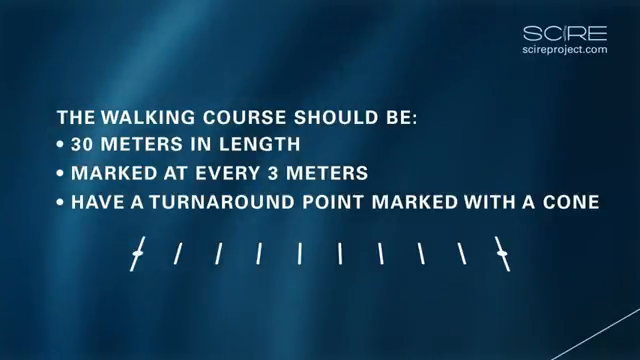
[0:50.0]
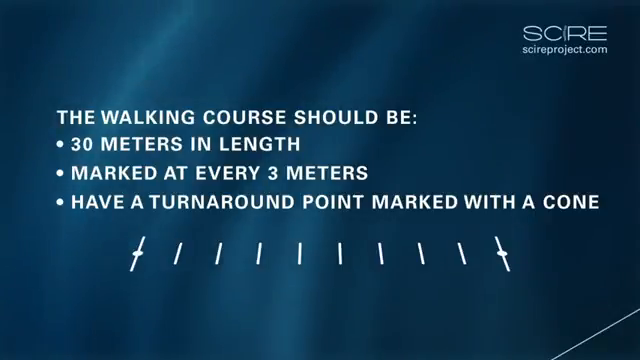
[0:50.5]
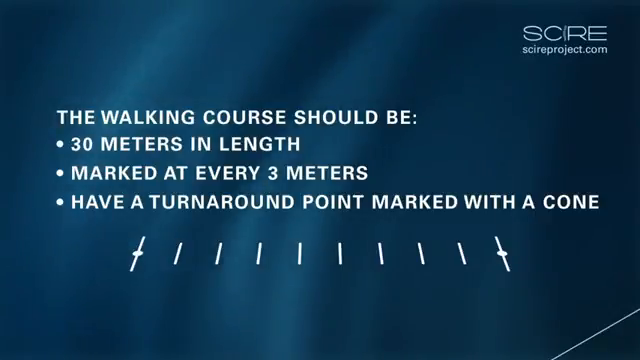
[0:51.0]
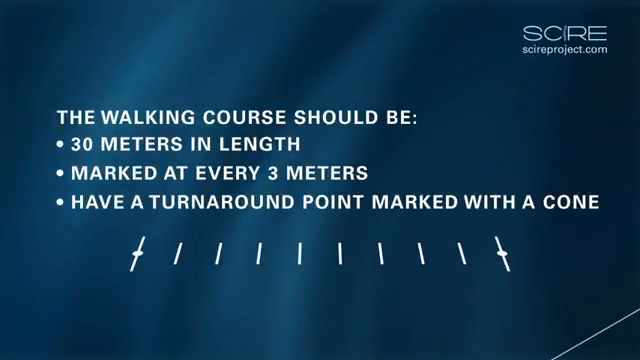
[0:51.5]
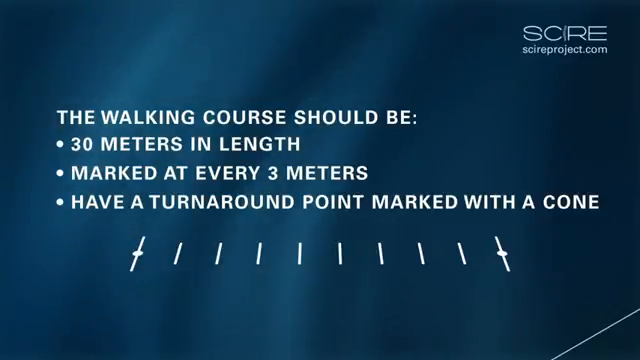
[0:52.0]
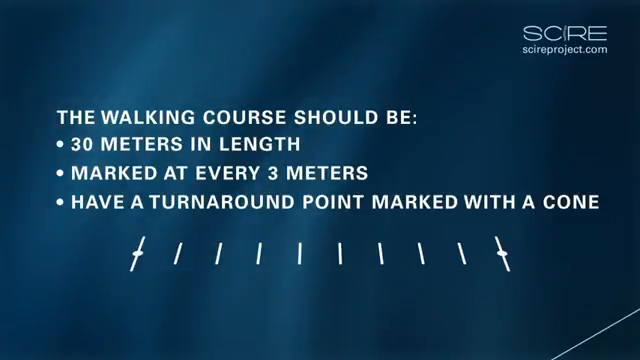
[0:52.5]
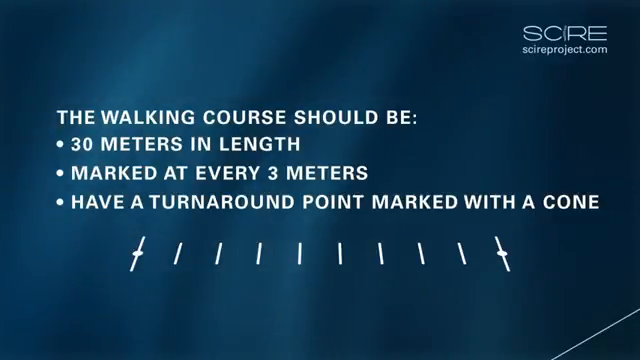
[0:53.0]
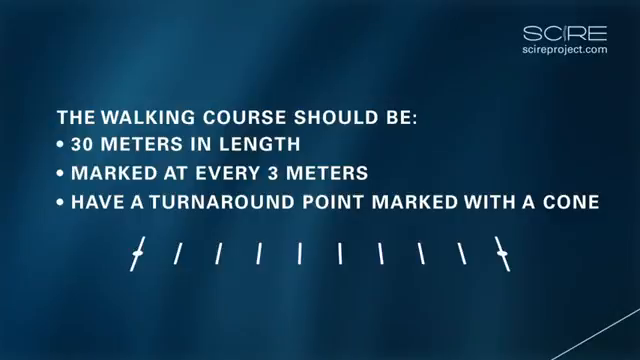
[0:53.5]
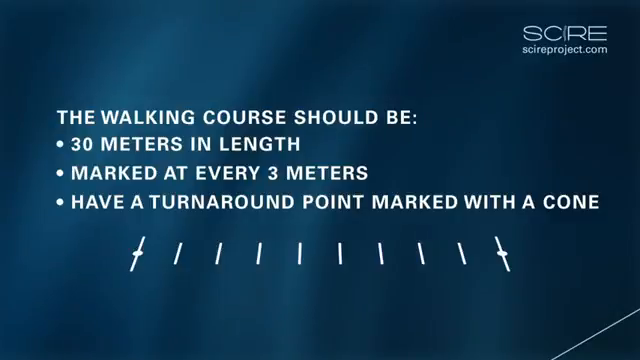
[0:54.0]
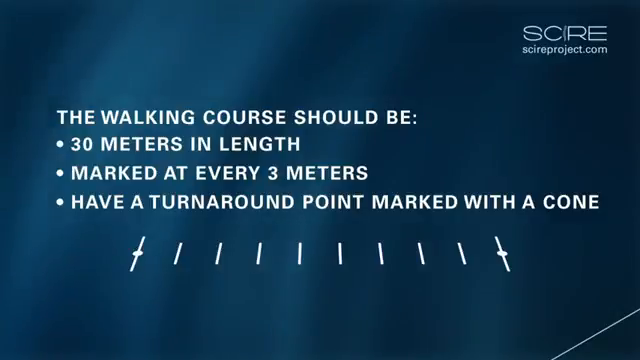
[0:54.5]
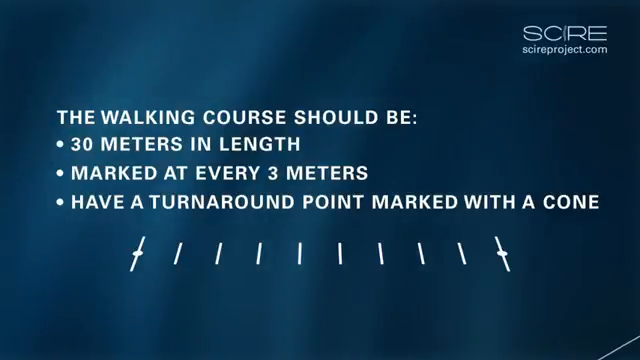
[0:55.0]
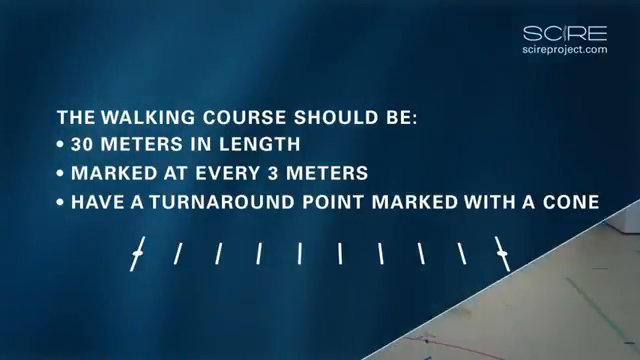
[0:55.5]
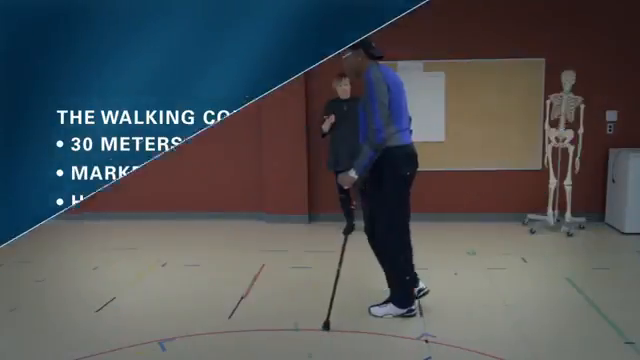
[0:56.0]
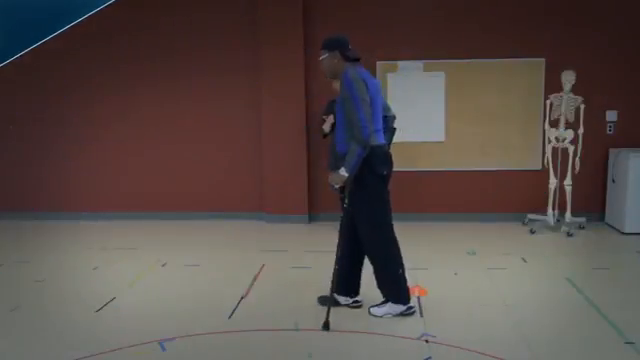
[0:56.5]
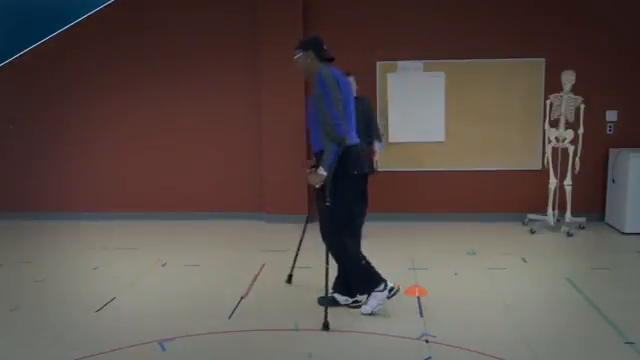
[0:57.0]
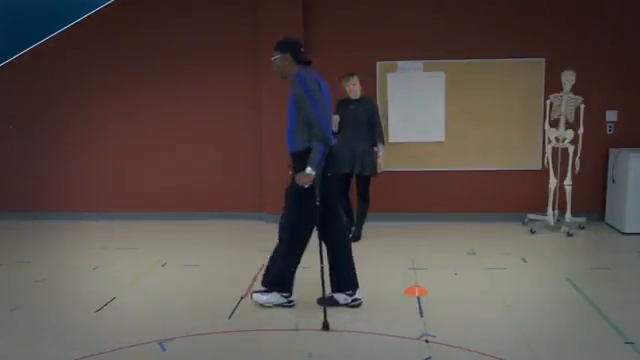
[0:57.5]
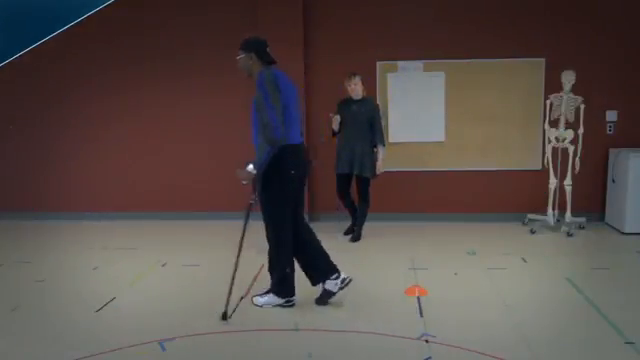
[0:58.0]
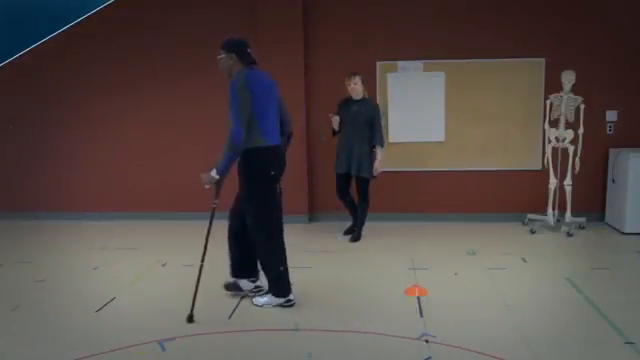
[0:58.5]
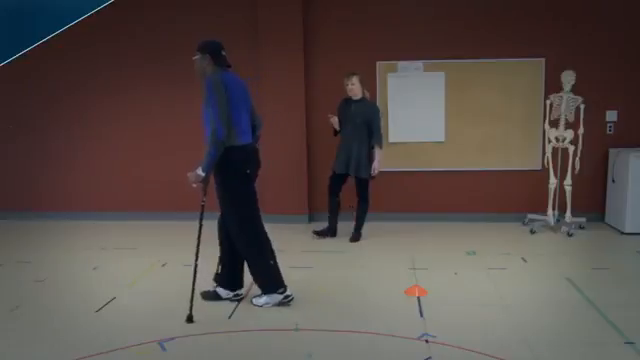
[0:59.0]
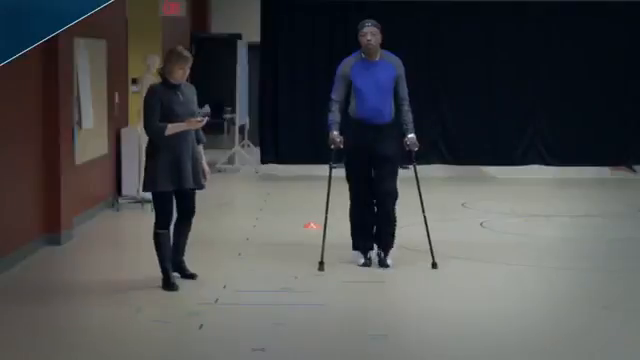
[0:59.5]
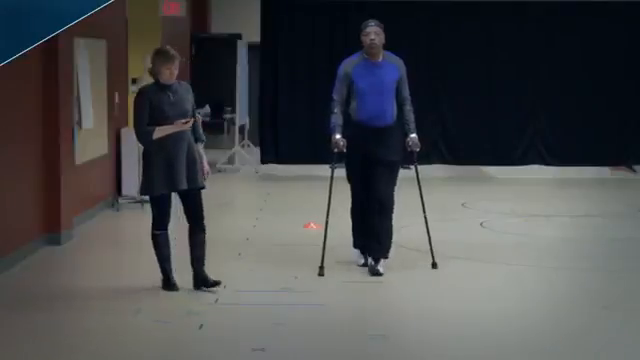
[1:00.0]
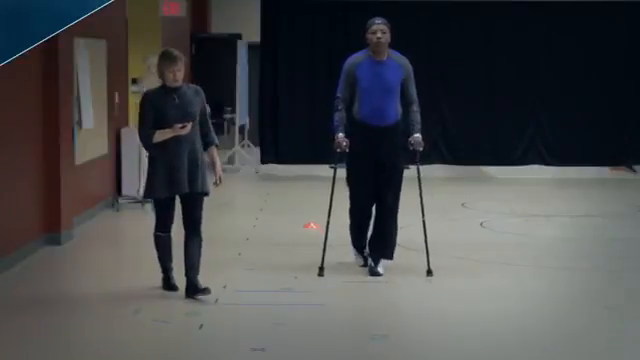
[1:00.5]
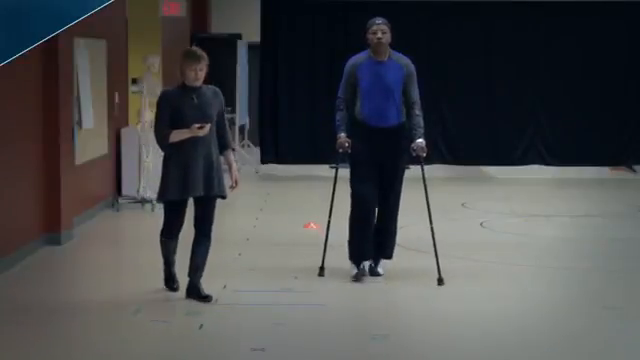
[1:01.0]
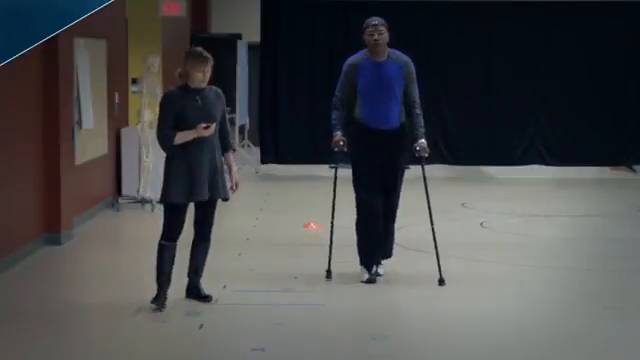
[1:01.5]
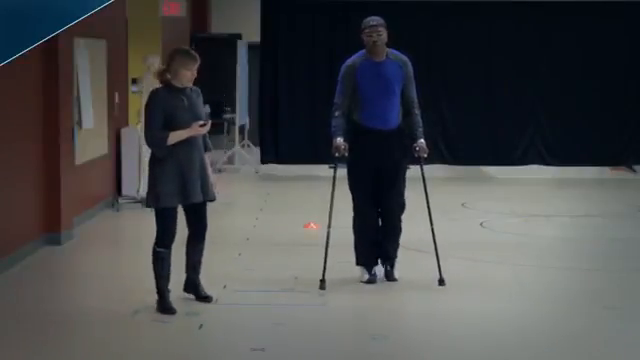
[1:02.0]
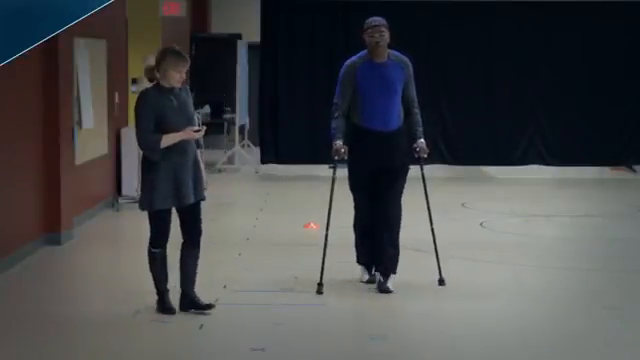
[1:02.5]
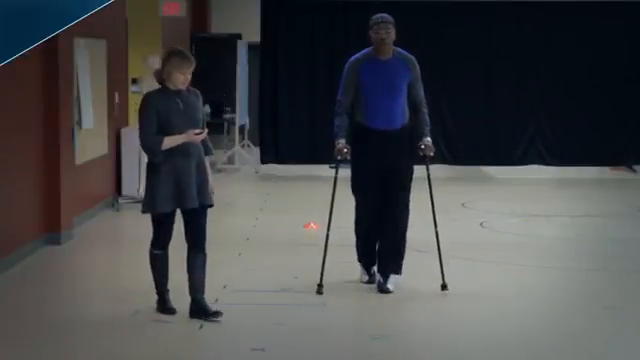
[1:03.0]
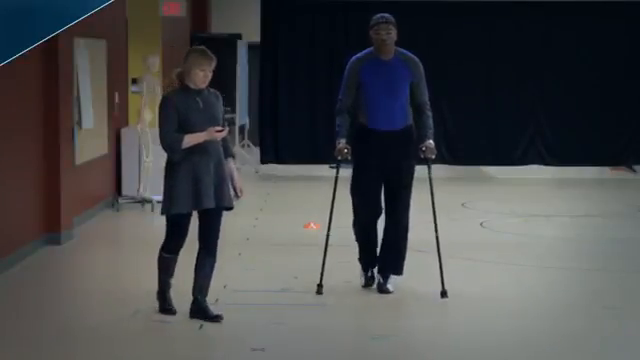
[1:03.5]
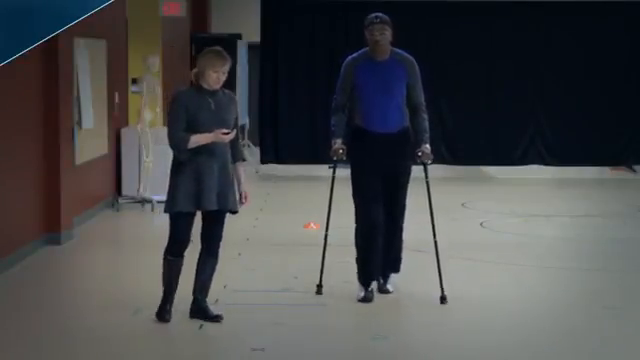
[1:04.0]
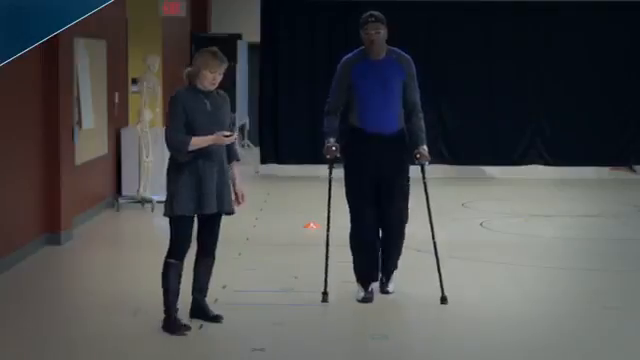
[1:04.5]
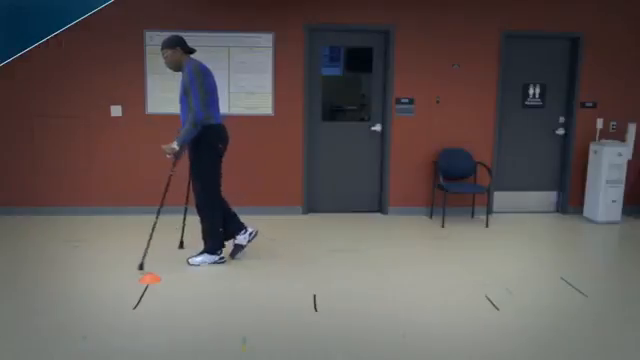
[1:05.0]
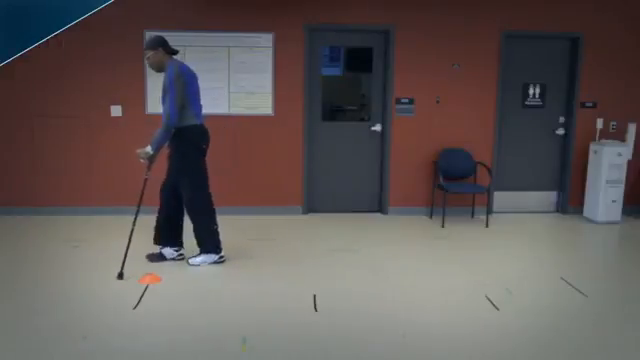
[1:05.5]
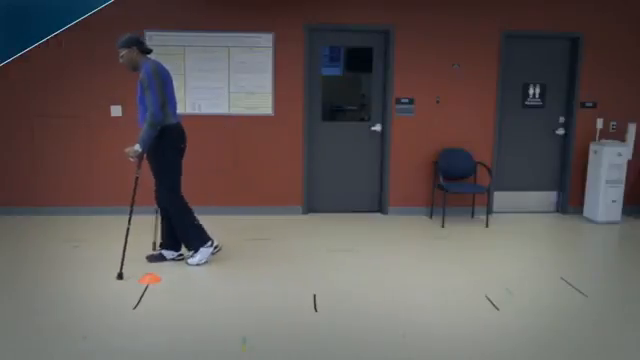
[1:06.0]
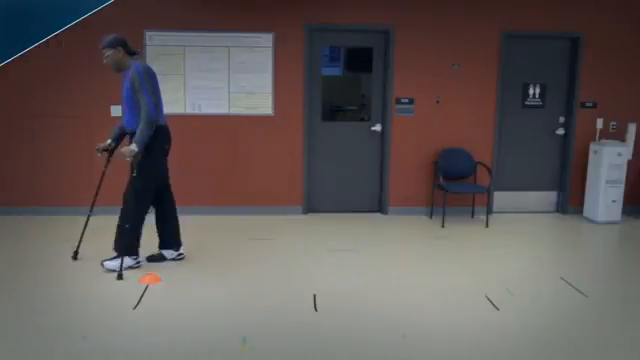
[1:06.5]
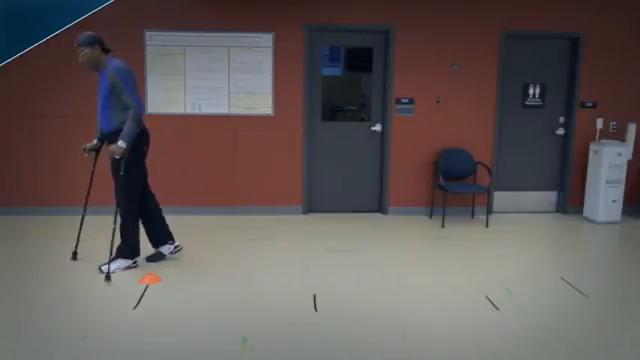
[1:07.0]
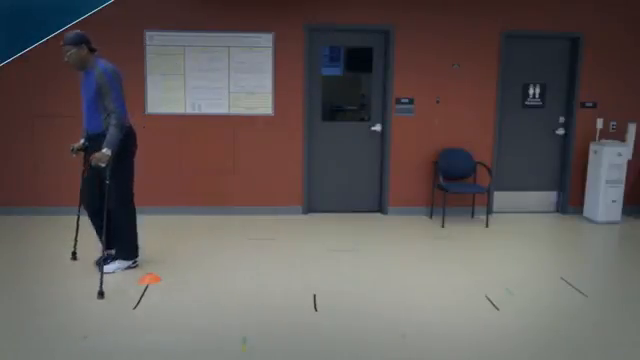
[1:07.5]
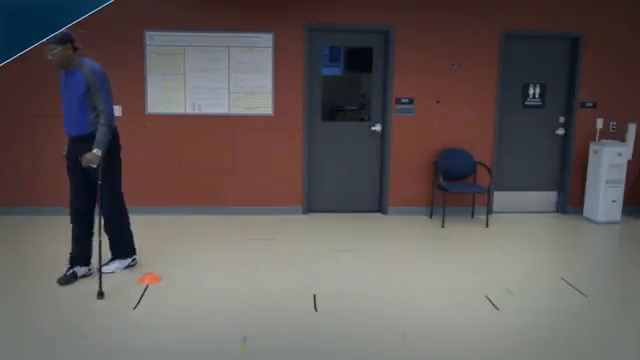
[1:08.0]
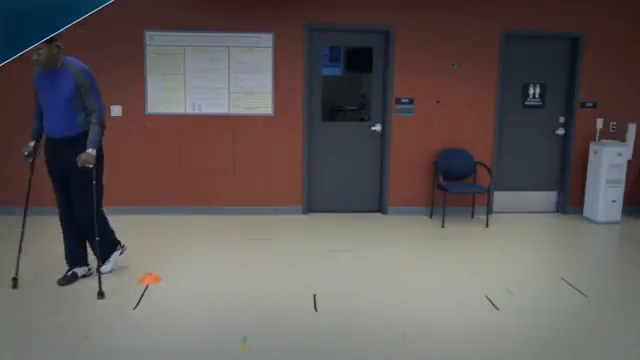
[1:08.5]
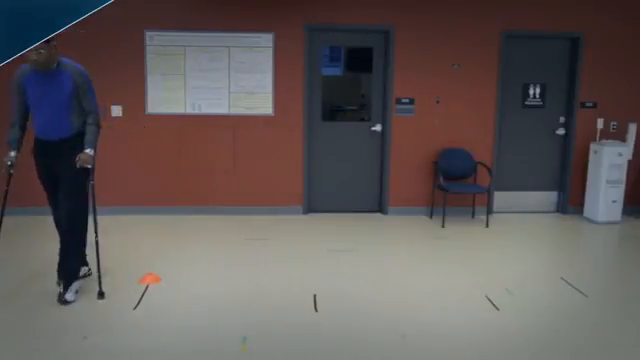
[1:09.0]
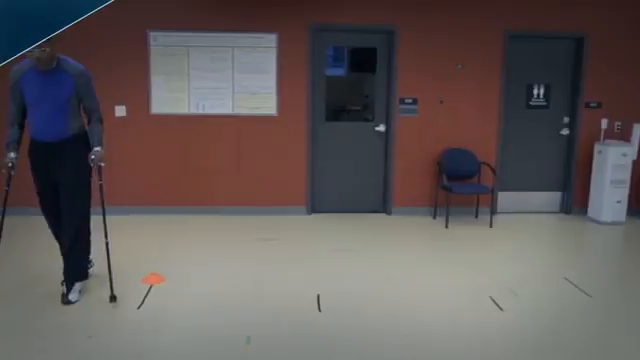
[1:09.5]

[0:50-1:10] After the text stays on screen a few more seconds, footage shows a man, seen from the side, as an example of the walking test. He walks slowly from the right of the screen to the left, with two walking sticks, one in each hand. He is a Black man wearing white trainers with a black trim, very dark black trousers, a blue long-sleeve shirt, a black baseball cap worn back to front, and glasses. The cream-coloured floor he is on is marked out with the 30 meter walking course, and the wall behind him is dark red. A notice board, possibly a chalkboard notice board, on the wall takes up the right of the screen behind him, and to the right of it is a human skeleton model, like one in a classroom or medical setting, about six foot tall. The view then changes to a straight-on angle as he walks toward the camera. A woman to his left walks alongside him, apparently timing him; she wears a grey long dressy shirt, black leggings or tight trousers, and what appear to be boots or wellingtons. At the end of the course the man turns around and heads back in the other direction.